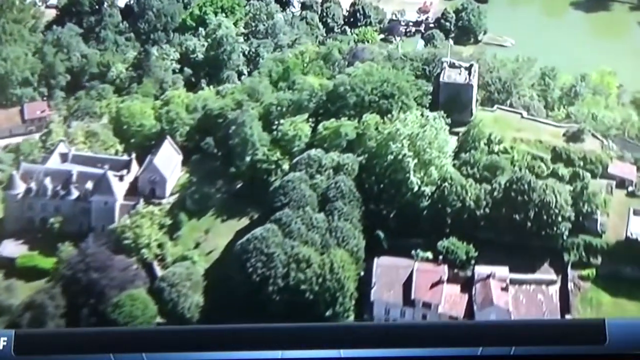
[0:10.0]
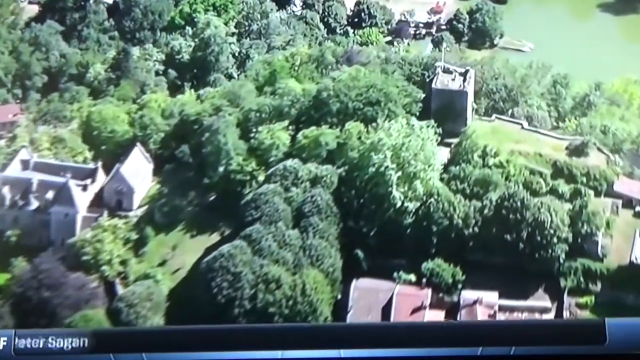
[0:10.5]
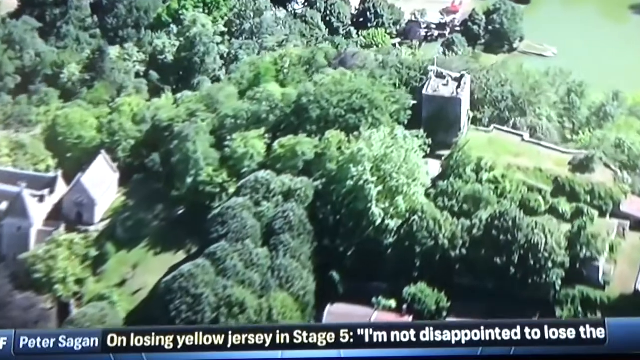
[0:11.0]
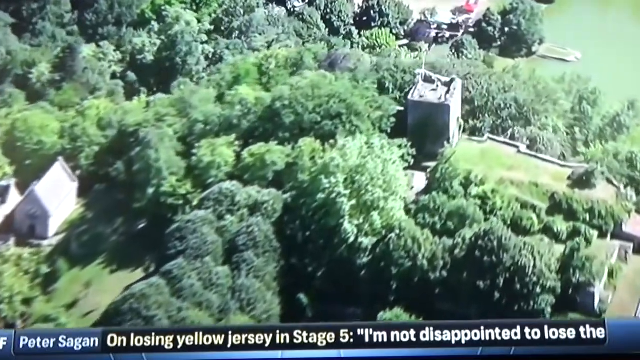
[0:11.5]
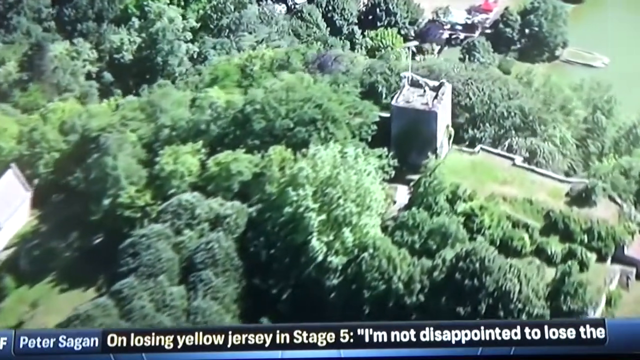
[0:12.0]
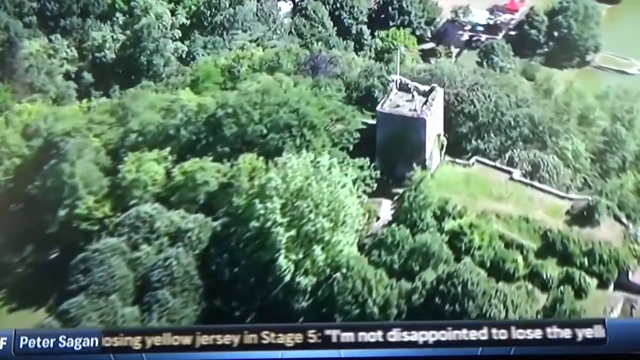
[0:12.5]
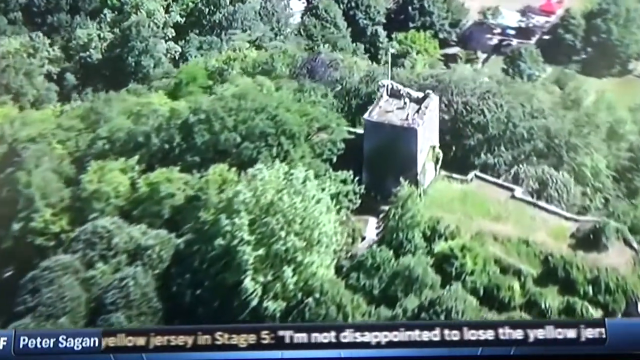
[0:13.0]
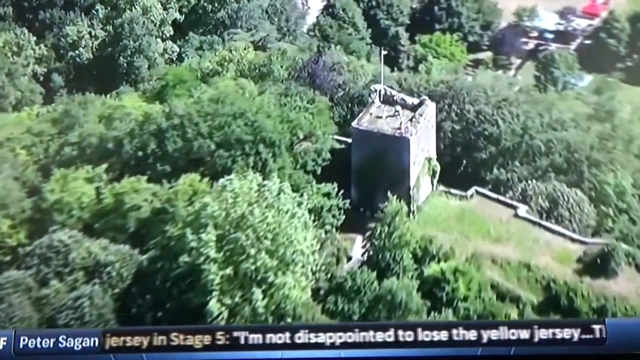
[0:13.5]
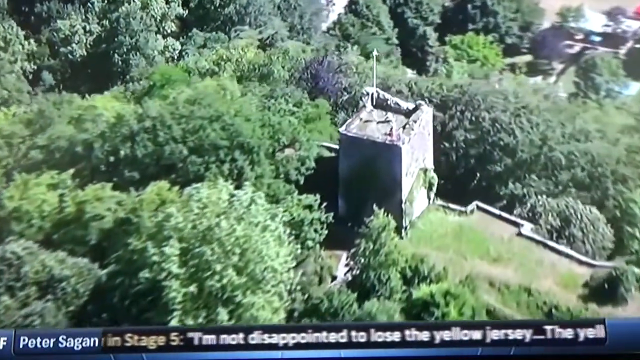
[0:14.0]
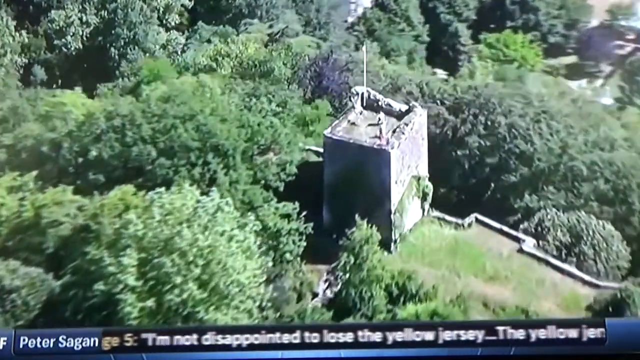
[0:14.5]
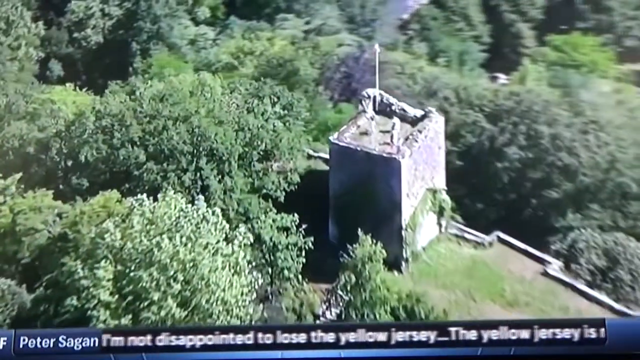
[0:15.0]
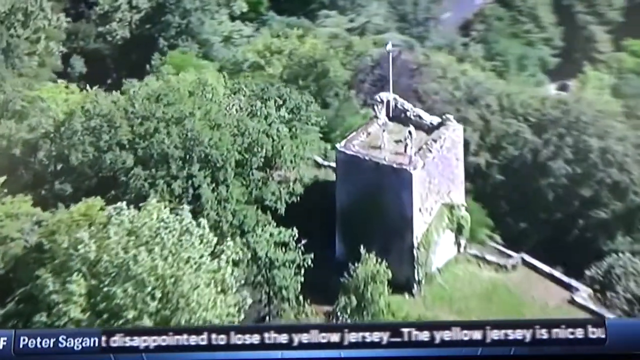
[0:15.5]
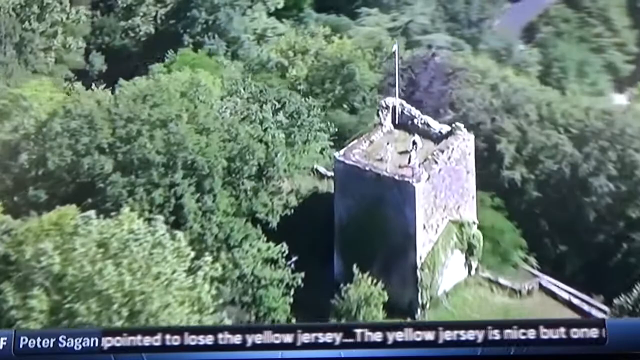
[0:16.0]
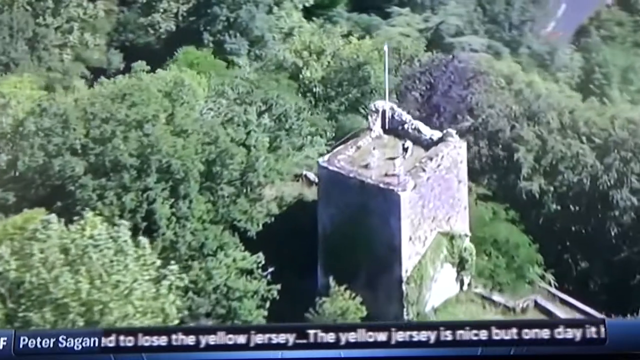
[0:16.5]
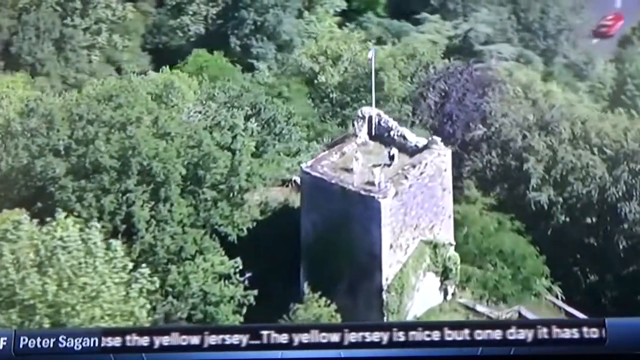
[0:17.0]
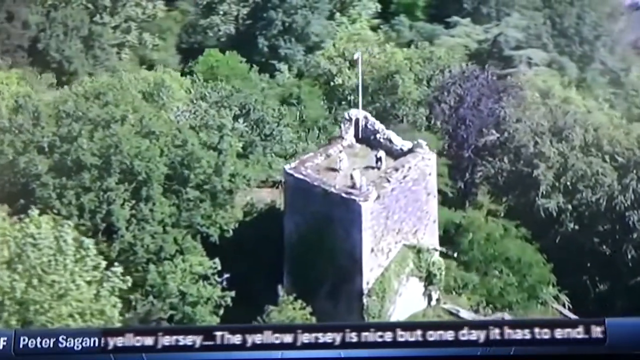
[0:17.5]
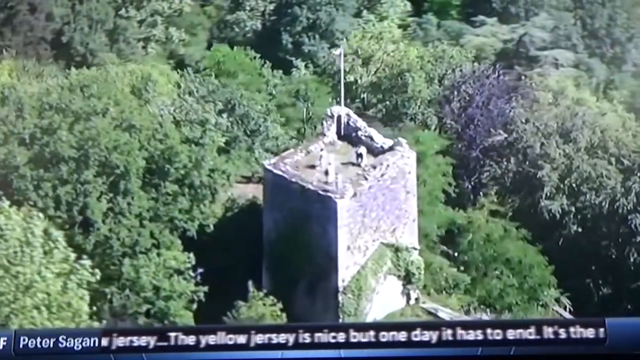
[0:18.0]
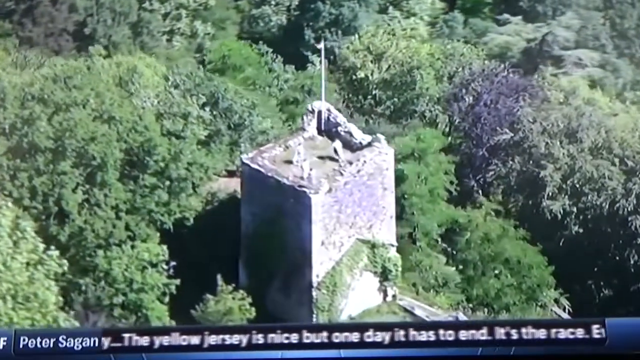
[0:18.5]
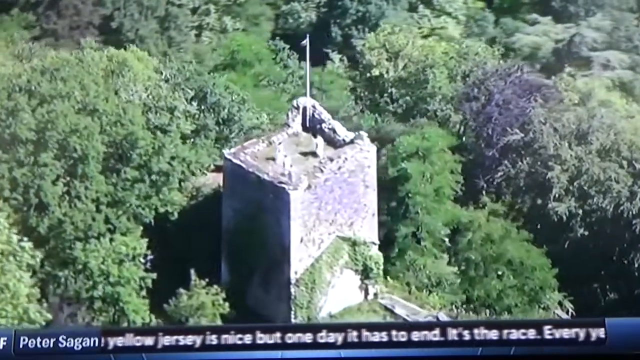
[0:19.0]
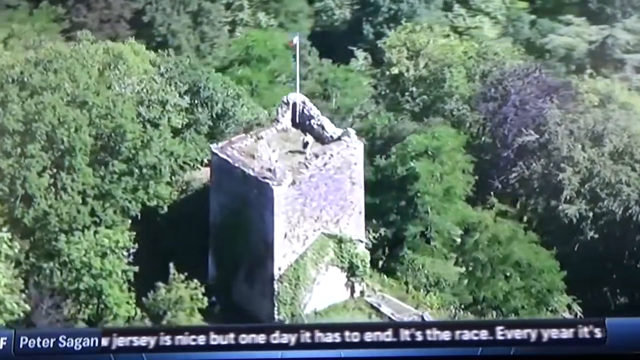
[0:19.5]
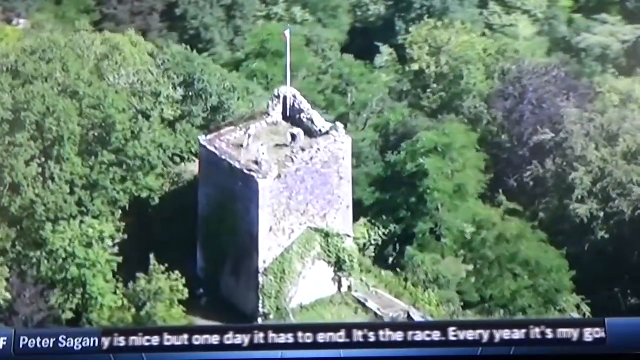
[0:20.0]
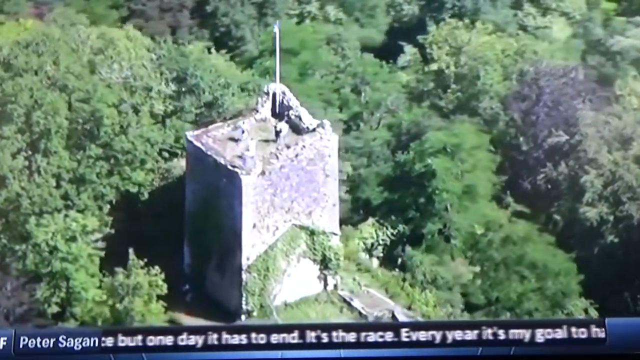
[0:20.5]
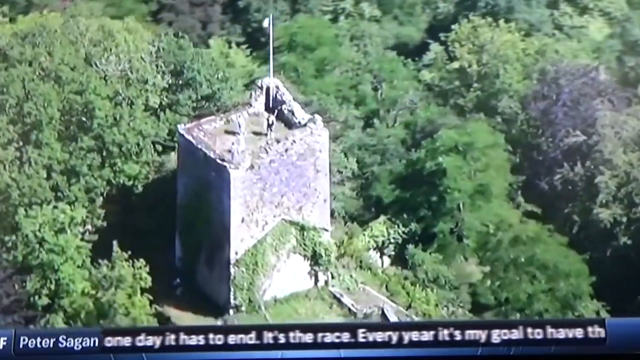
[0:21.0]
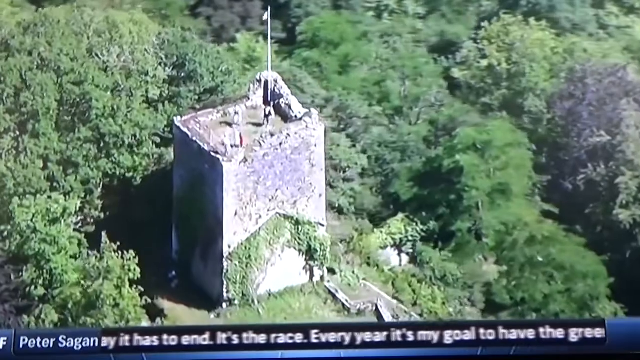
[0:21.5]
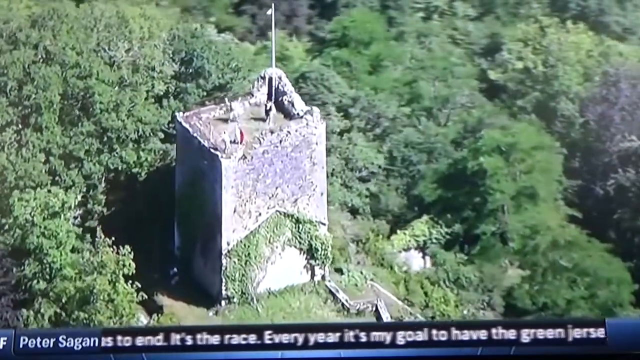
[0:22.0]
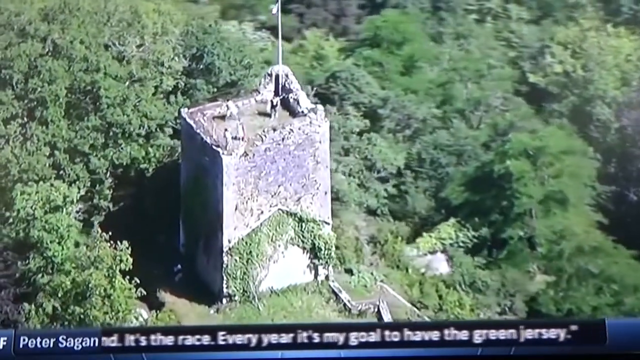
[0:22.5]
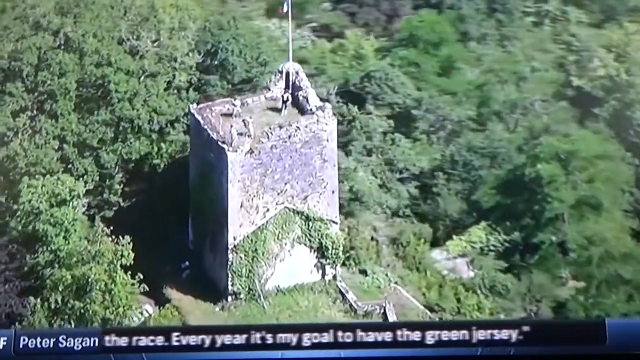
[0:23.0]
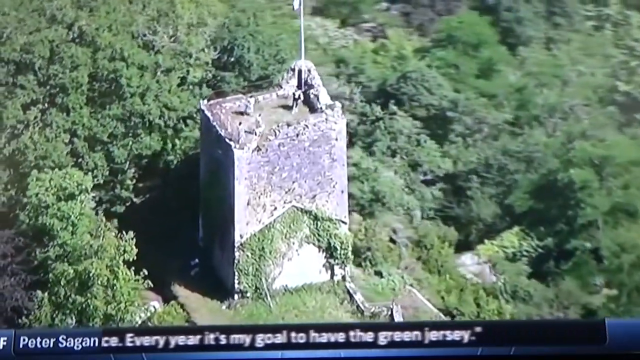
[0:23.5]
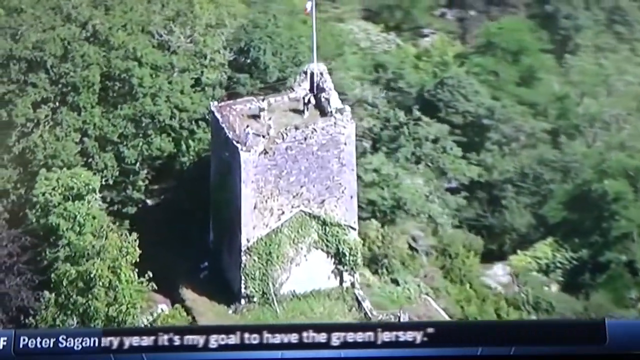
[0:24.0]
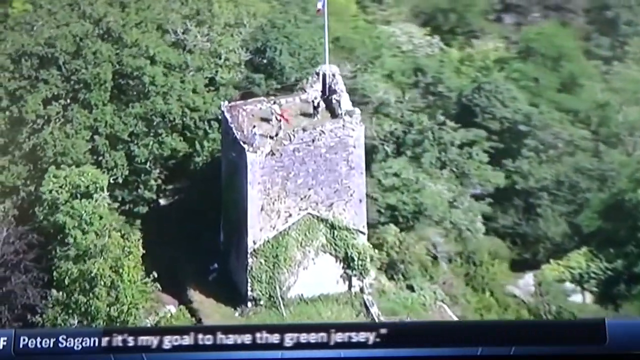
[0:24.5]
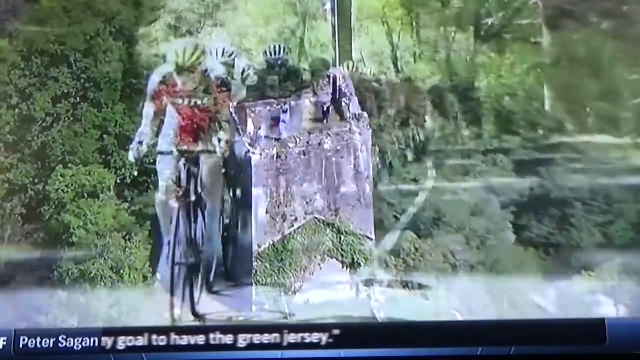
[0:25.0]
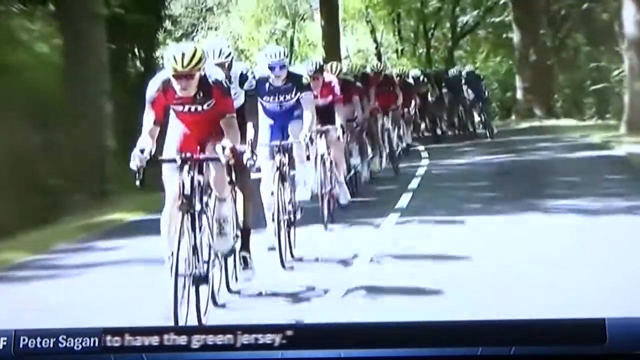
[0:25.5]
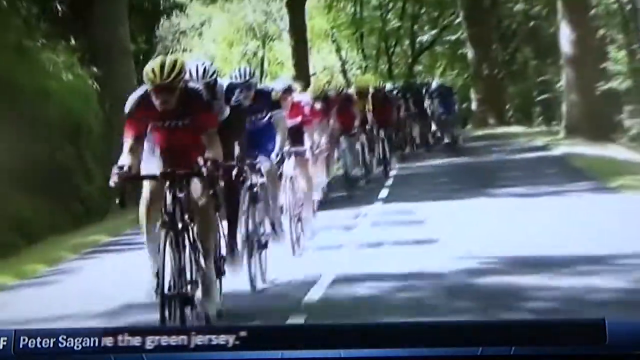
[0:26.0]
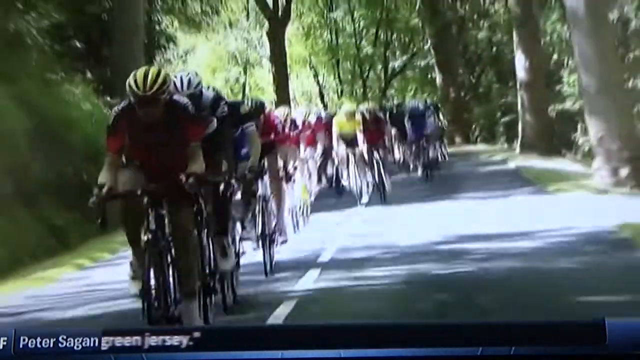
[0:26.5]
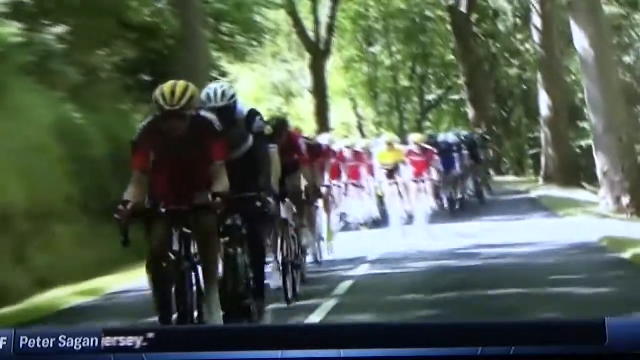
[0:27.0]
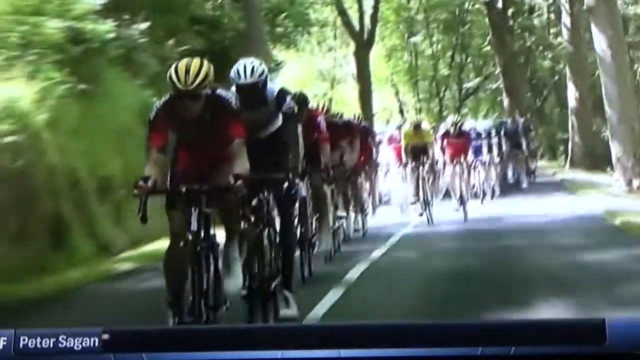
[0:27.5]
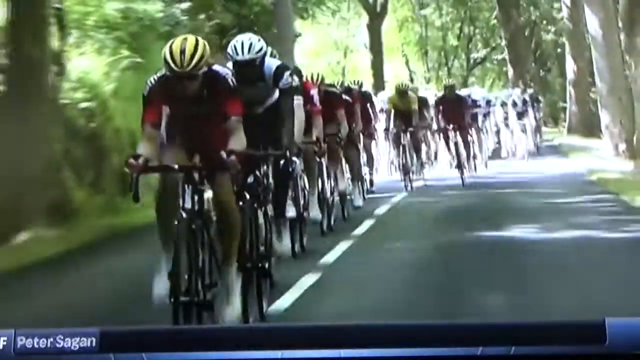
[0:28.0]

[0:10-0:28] An aerial view shows a place with many green mountains and trees and the rooftops of similar houses scattered alongside a road that looks very curved. A group of 4 people on top of a building move around quite a lot and wave a red flag; they seem to be watching a group of cyclists racing on the road. The cyclists all seem to be in a competitive race, and the leading cyclist at the front wears a red shirt and a yellow and black helmet. They all ride at a very fast pace along the road between the green fields and trees. There are possibly 20 cyclists.